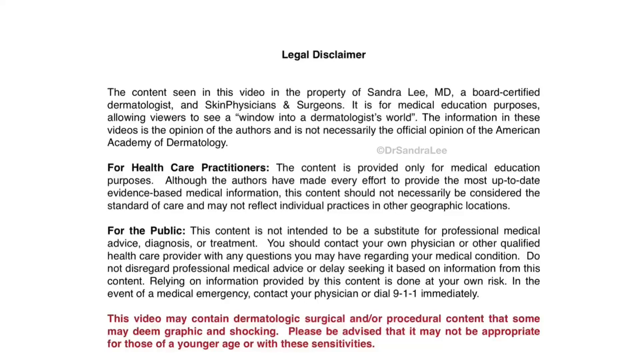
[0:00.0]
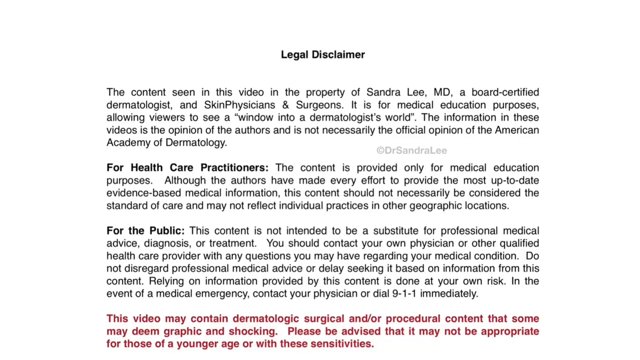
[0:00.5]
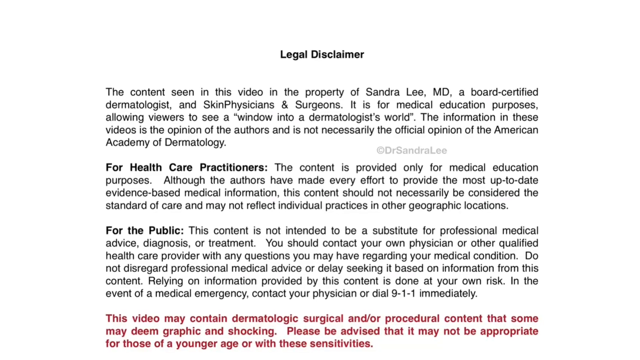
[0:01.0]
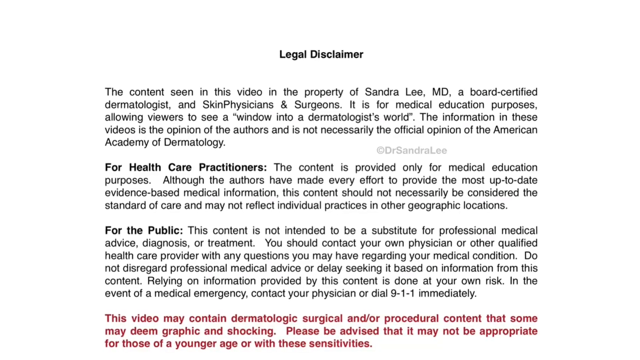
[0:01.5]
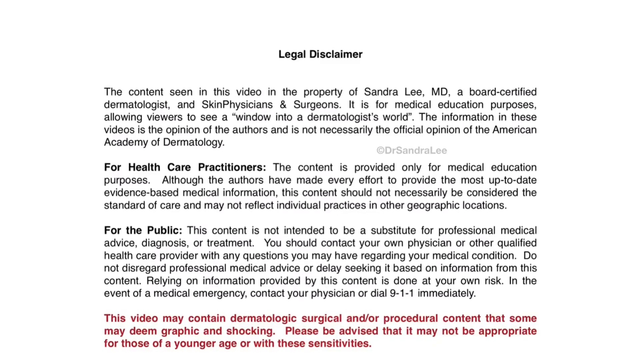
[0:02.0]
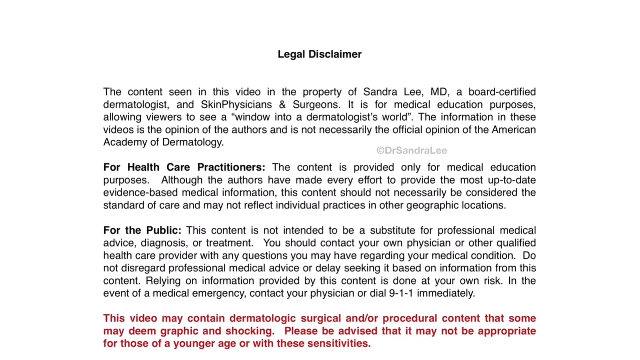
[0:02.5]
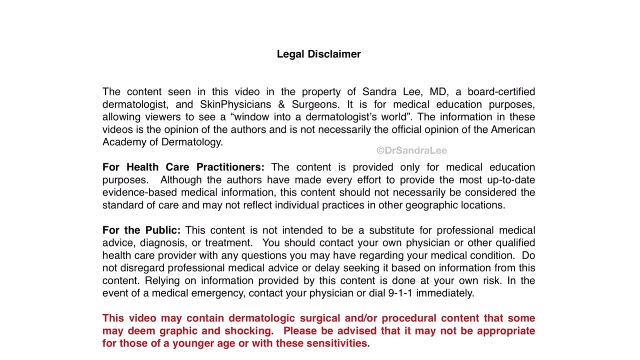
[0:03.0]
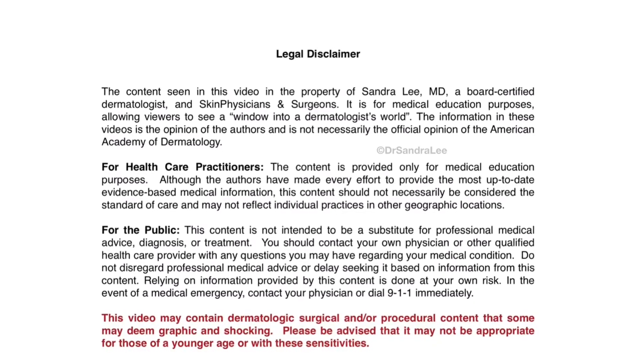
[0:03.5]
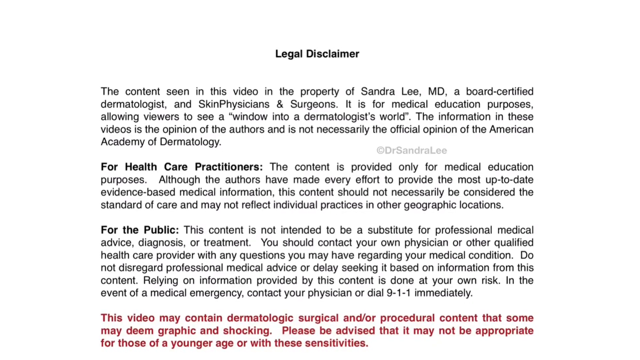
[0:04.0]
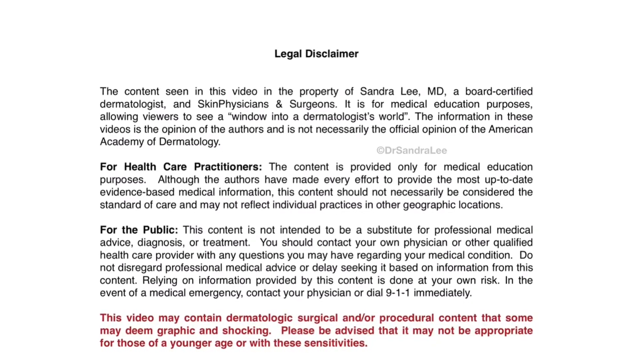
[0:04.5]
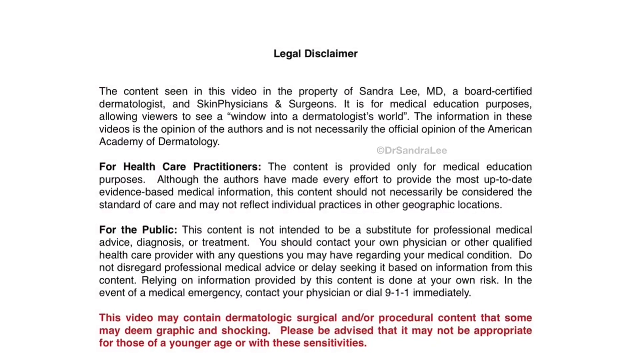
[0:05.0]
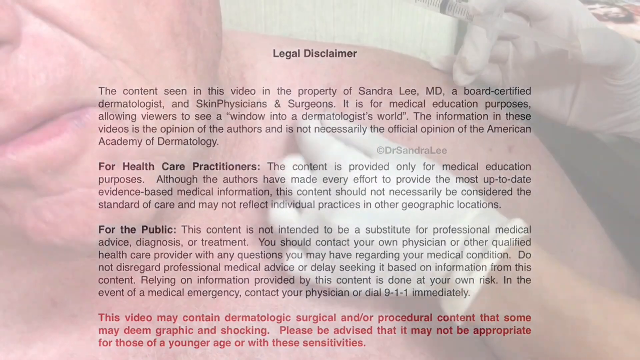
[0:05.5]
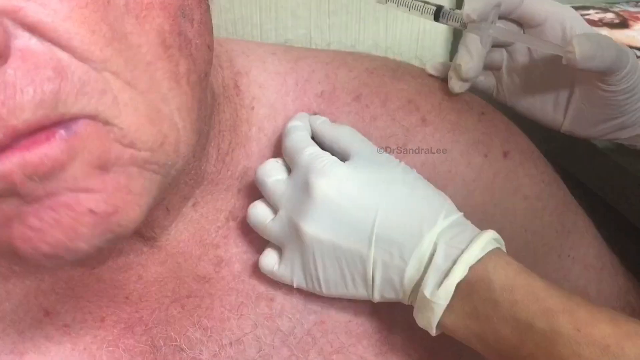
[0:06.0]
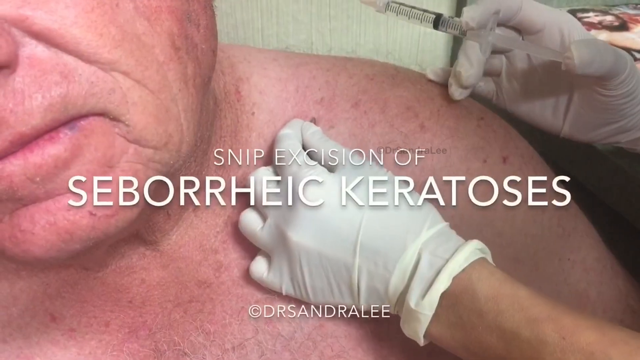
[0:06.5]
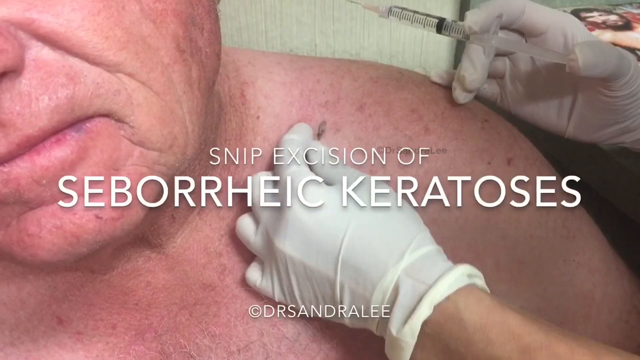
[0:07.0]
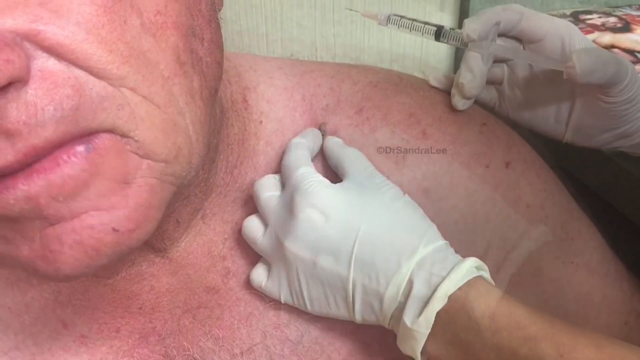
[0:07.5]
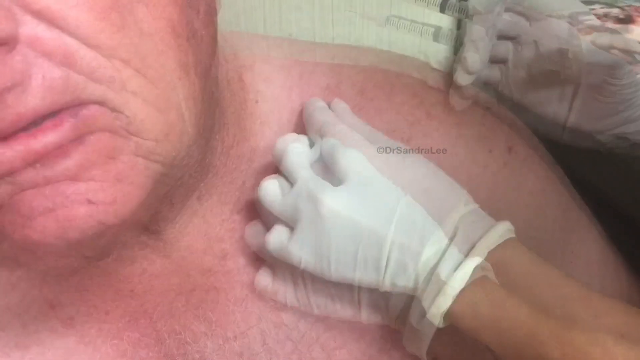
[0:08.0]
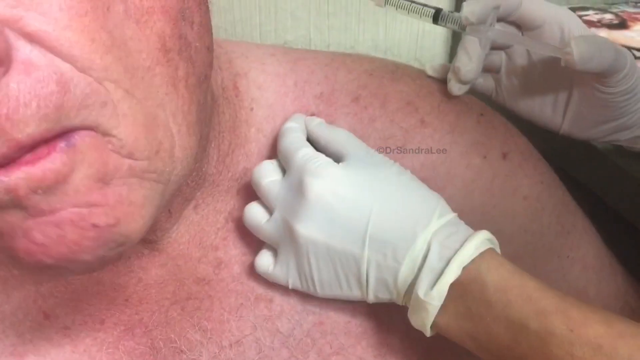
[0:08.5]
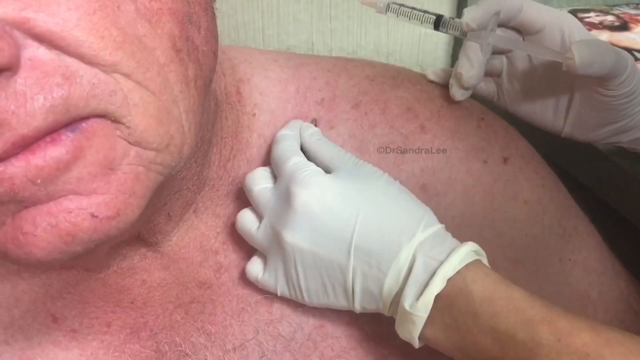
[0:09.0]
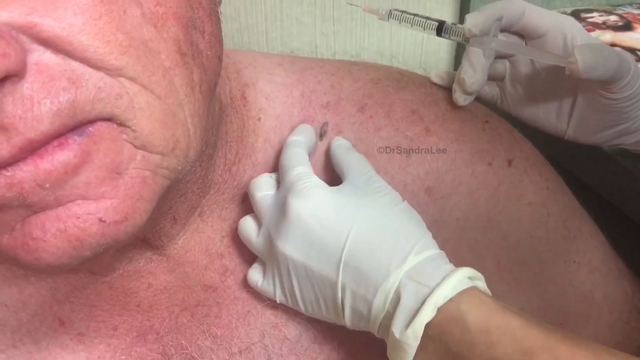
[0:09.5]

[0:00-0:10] The video opens with a legal disclaimer in black text on a white background. It states that the content is the property of Sandra Lee, medical doctor, a board certified dermatologist, and Skin Physicians and Surgeons; that it is for medical purposes, allowing viewers a window into a dermatologist's world; and that the information in these videos is the opinion of the authors and not necessarily the official opinion of the American Academy of Dermatology. Advice for healthcare practitioners and for the public follows. The video then cuts to an older man with a lot of freckles and no shirt on. A doctor or healthcare worker wearing white gloves works on his left shoulder, holding a syringe with some liquid inside in the right hand and pinching part of the skin with the left. The title reads "snip excision of seborrheic keratoses." What they are working on looks like a mole.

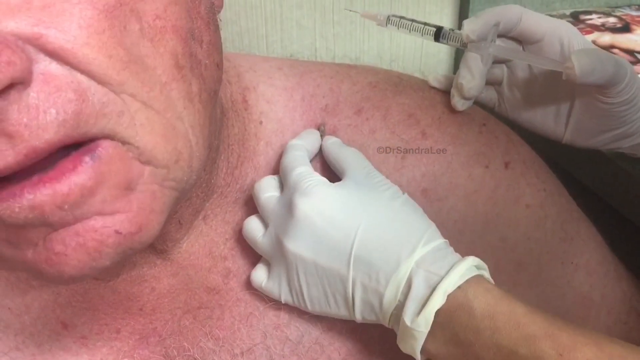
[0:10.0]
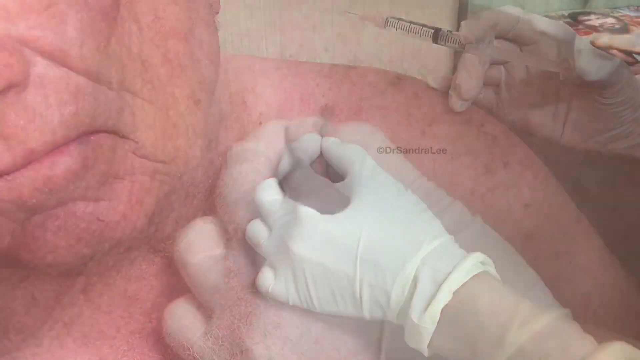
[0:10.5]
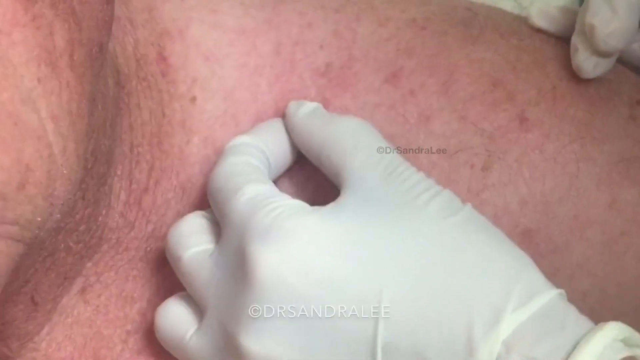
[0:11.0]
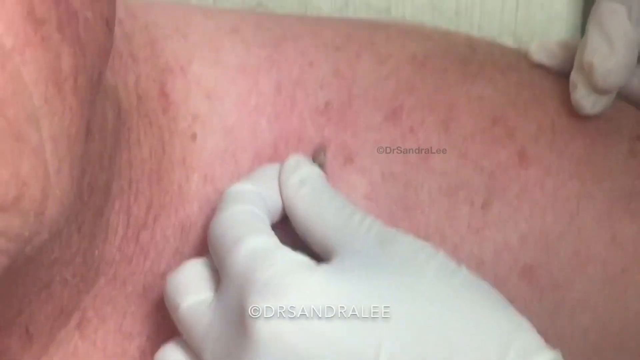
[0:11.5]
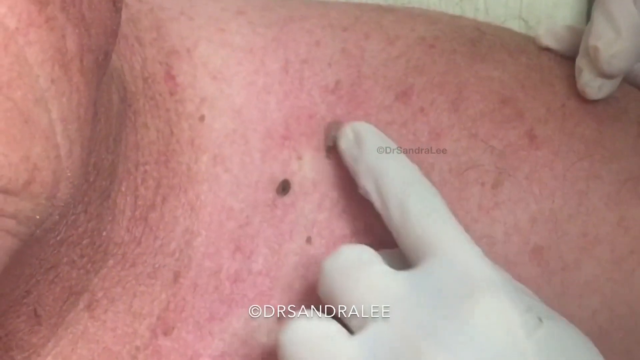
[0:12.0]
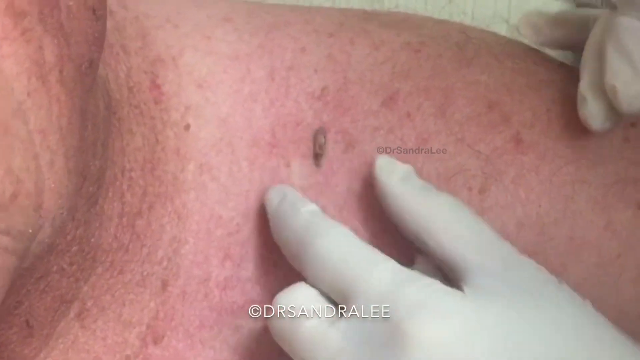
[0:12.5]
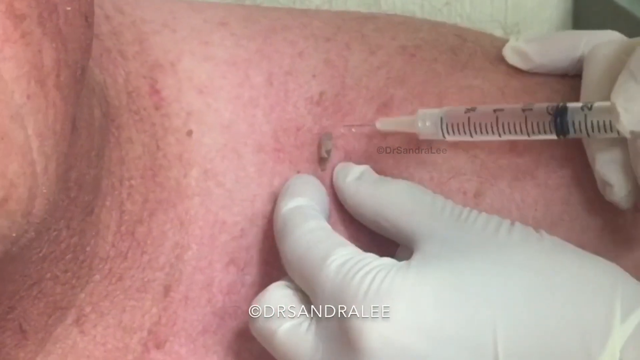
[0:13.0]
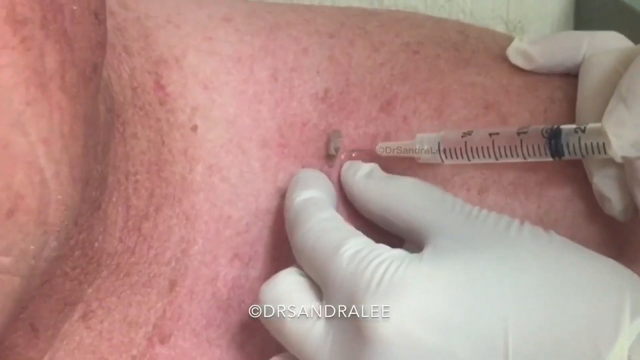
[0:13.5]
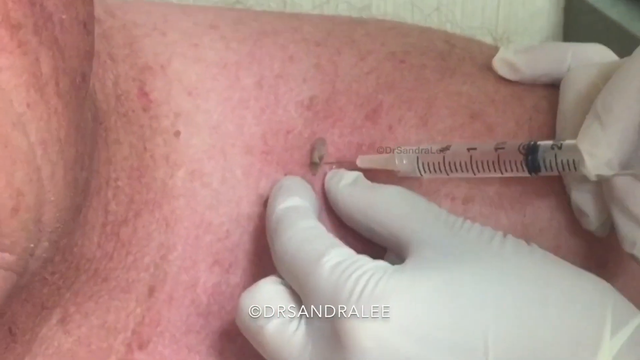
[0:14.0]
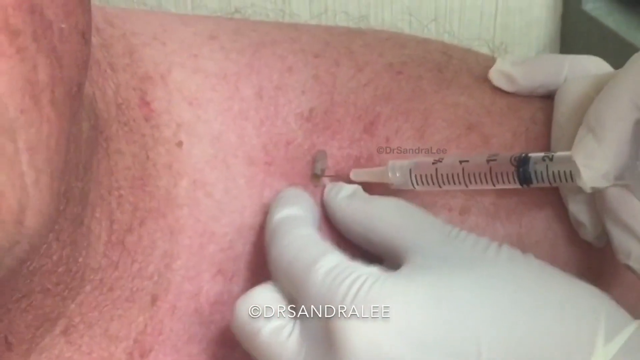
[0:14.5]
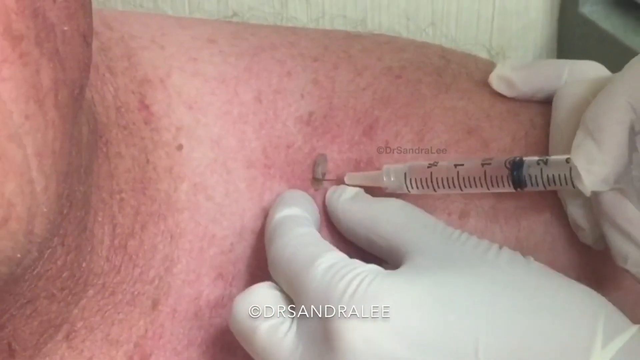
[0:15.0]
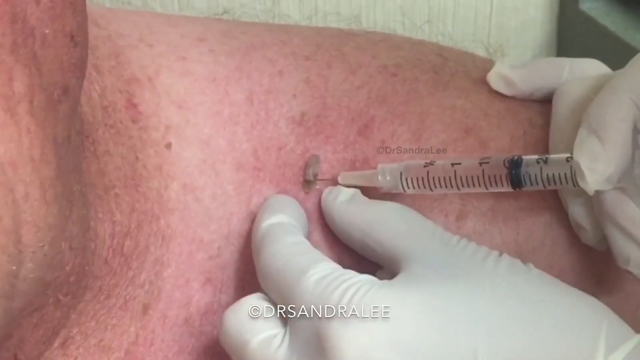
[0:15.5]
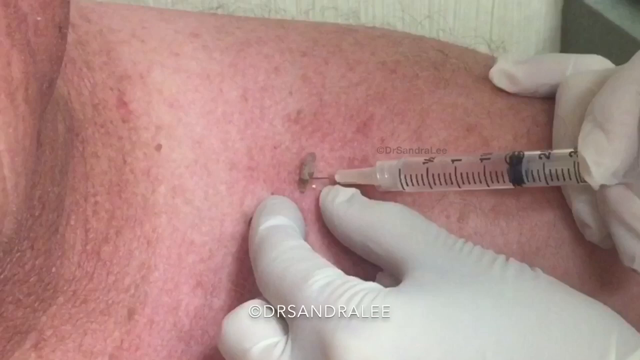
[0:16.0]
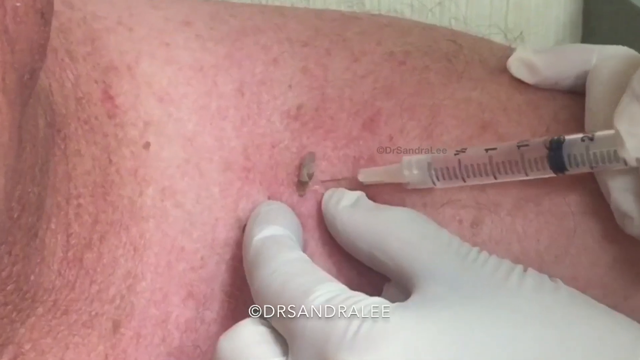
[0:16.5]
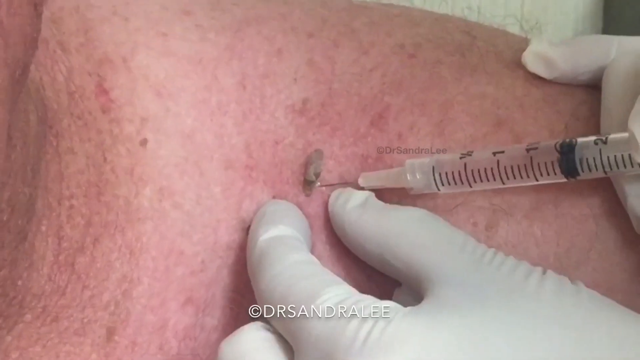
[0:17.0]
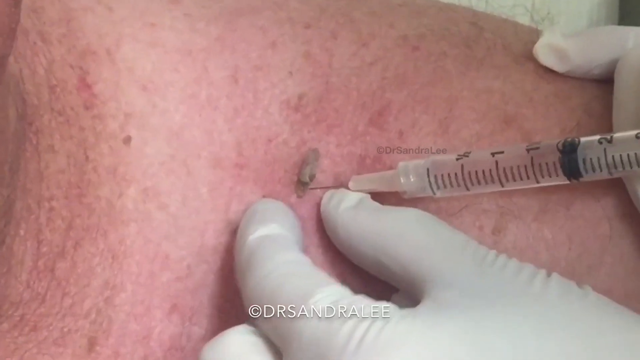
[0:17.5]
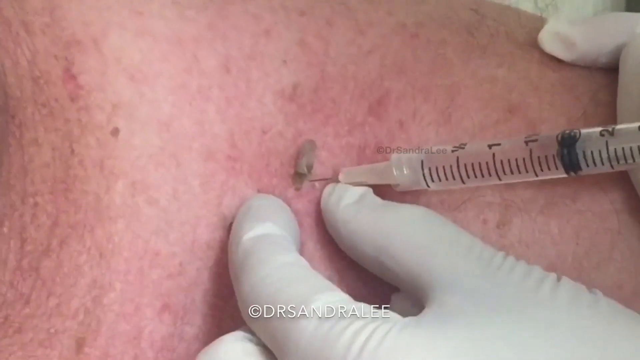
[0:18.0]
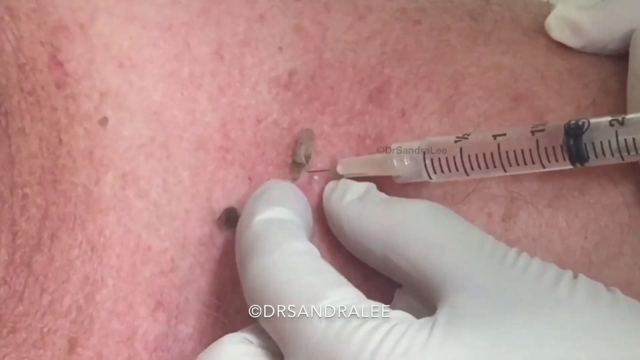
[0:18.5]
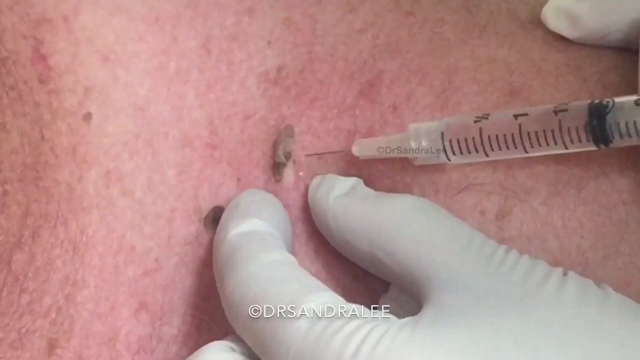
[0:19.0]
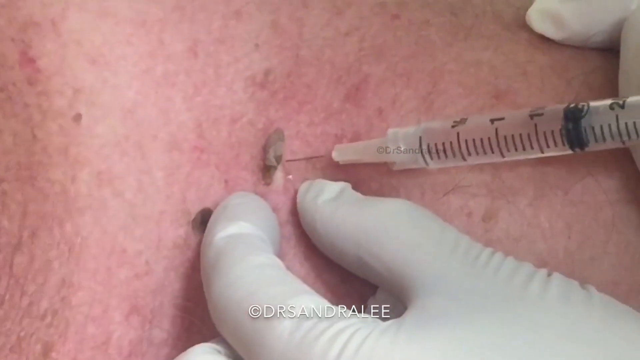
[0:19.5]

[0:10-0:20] In a room, a doctor works on a Caucasian man in his 50s or 60s who has lots of freckles and whose left shoulder is exposed, with no shirt on. The doctor wears white gloves and pinches a mole that looks like a dark part of the skin on the shoulder, holding a syringe with some liquid inside in the right hand. The doctor flips the little tag or mole back with a finger, then pokes the needle into the skin right beside it while shaking the skin, and injects a little fluid. Each time the needle goes in a little, the doctor shakes the skin around the mole.